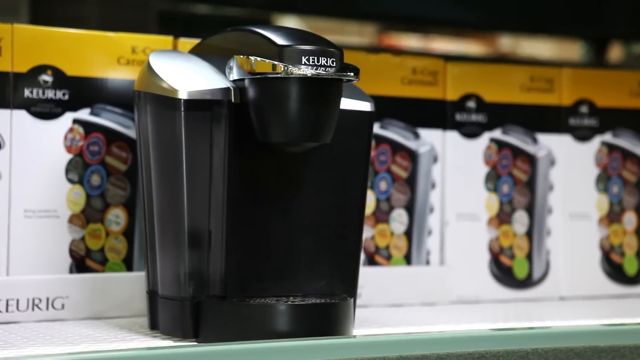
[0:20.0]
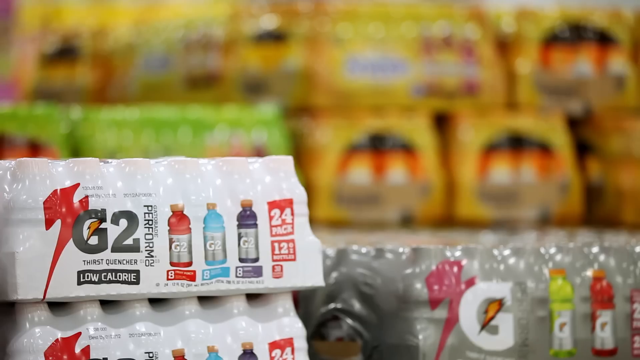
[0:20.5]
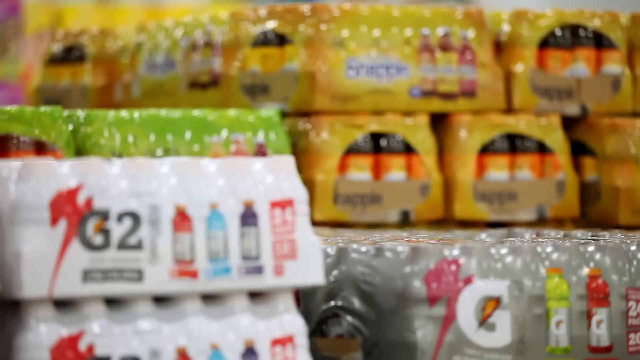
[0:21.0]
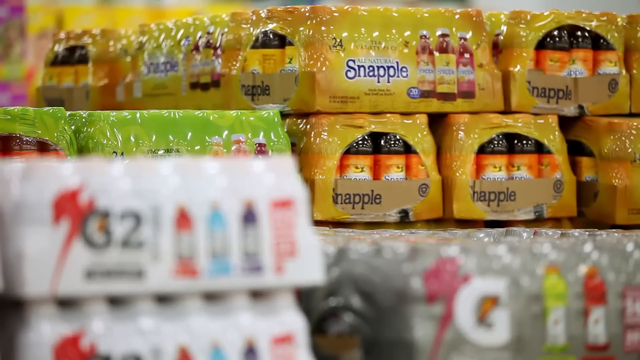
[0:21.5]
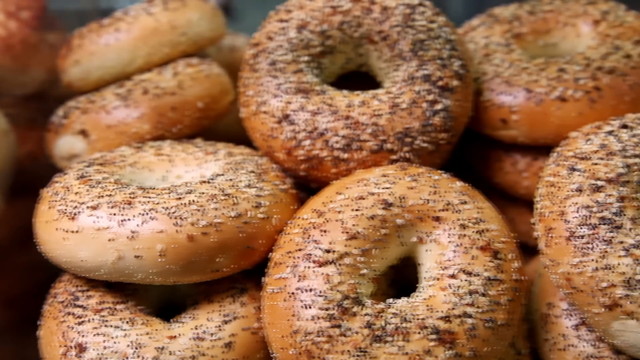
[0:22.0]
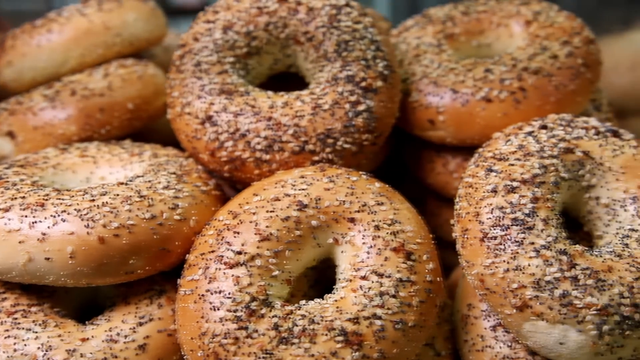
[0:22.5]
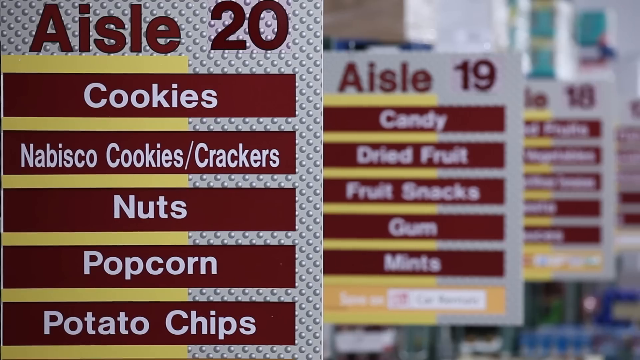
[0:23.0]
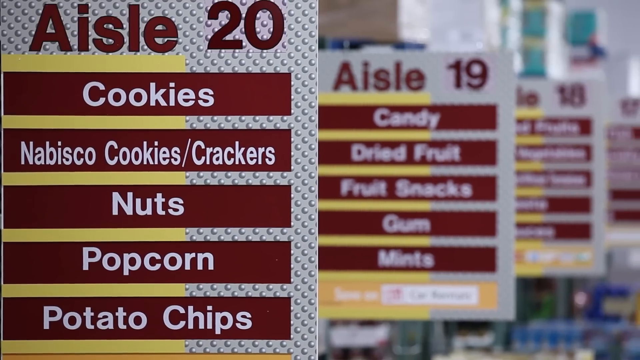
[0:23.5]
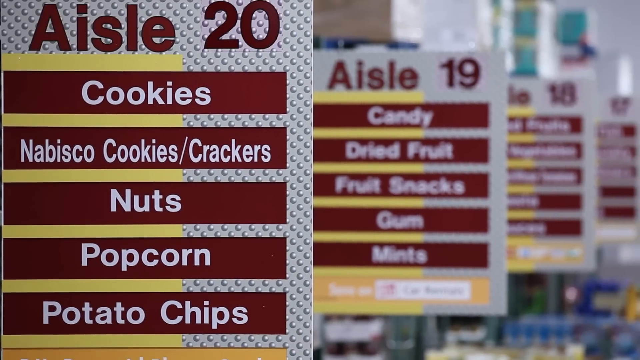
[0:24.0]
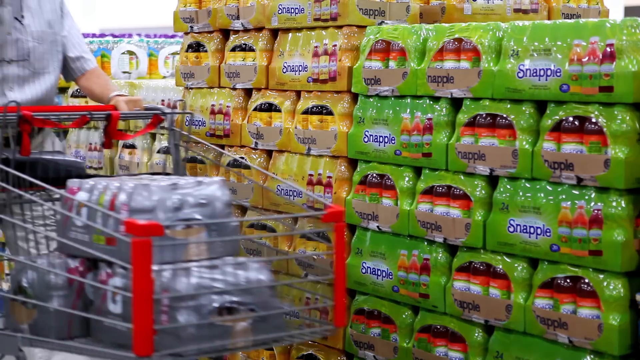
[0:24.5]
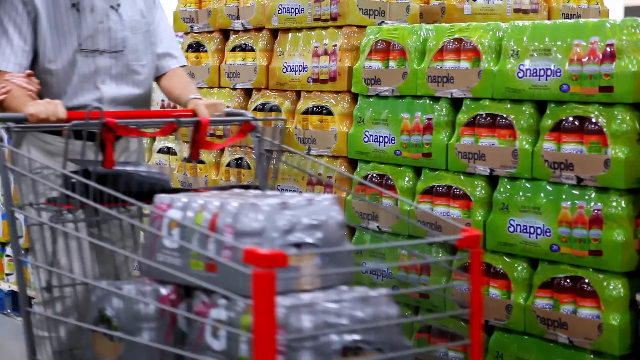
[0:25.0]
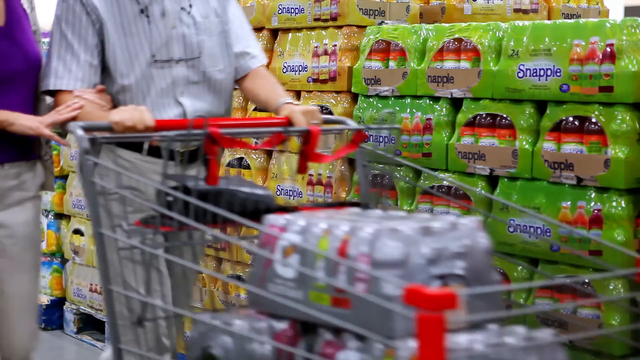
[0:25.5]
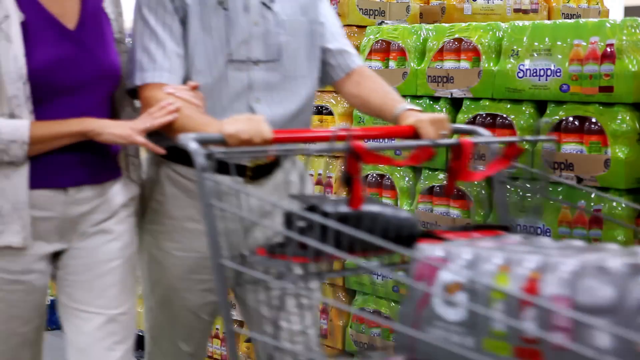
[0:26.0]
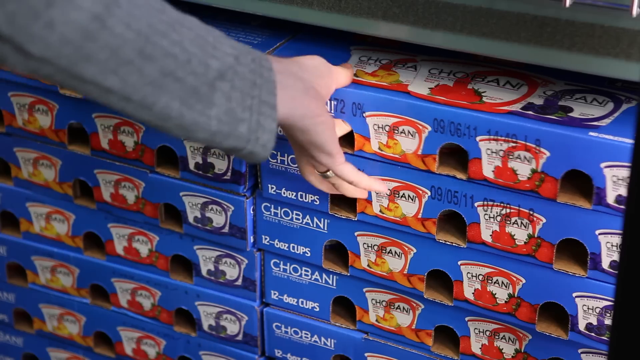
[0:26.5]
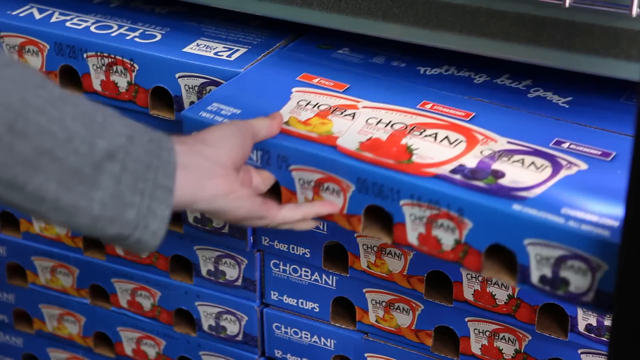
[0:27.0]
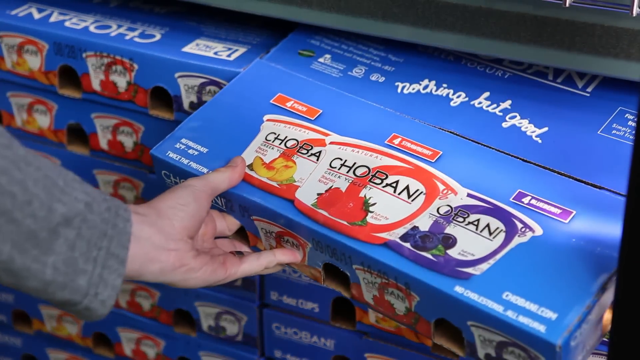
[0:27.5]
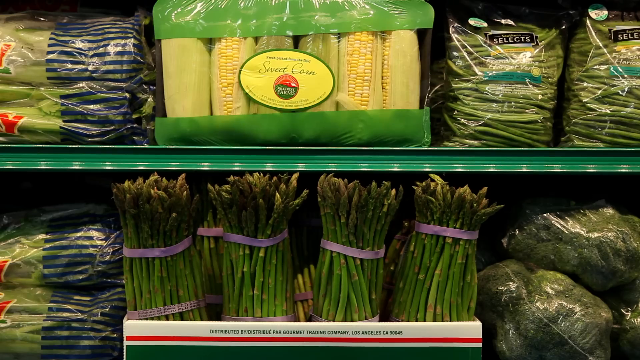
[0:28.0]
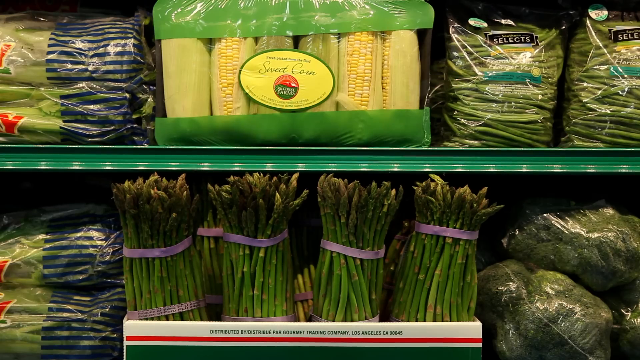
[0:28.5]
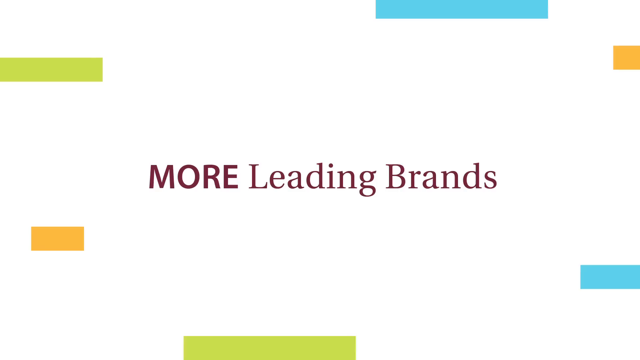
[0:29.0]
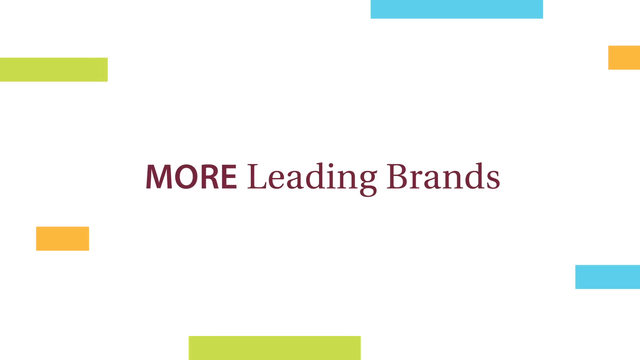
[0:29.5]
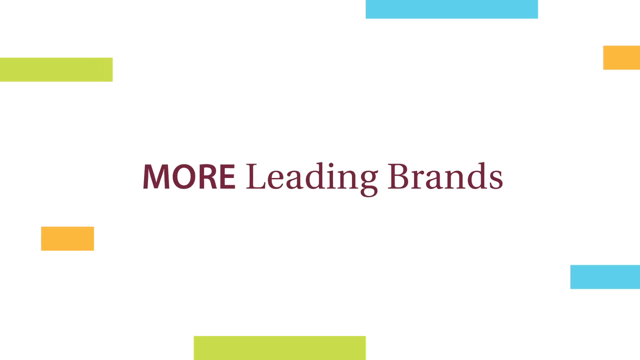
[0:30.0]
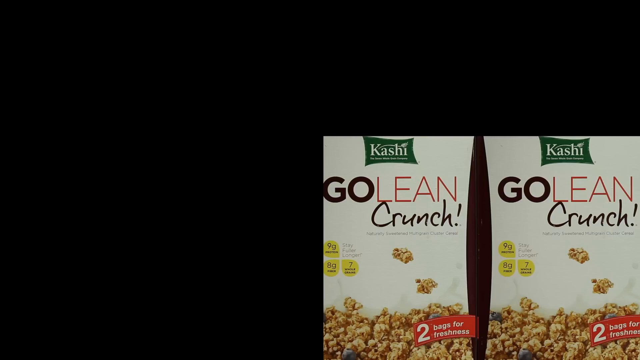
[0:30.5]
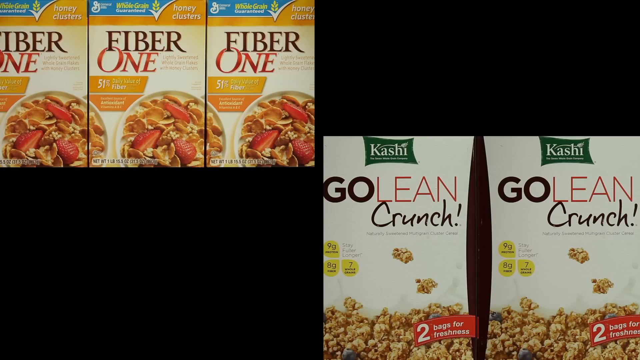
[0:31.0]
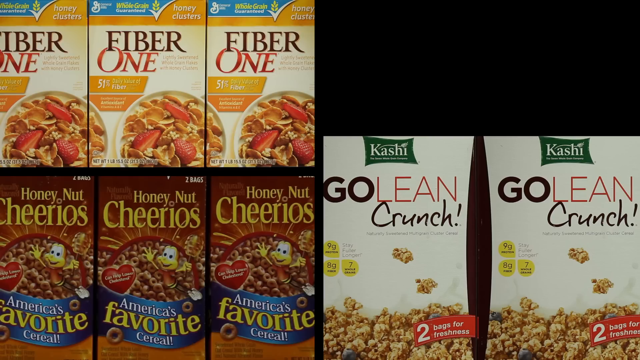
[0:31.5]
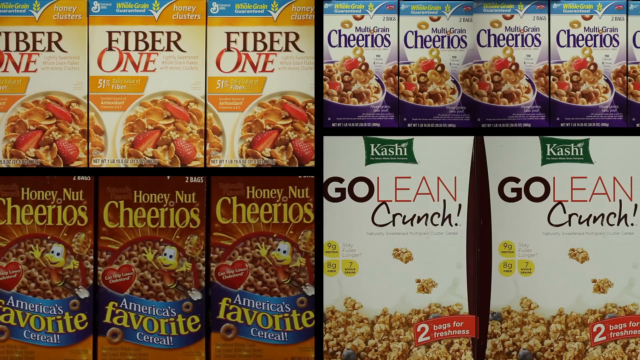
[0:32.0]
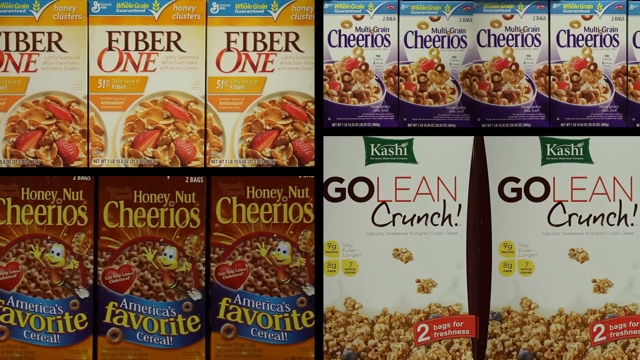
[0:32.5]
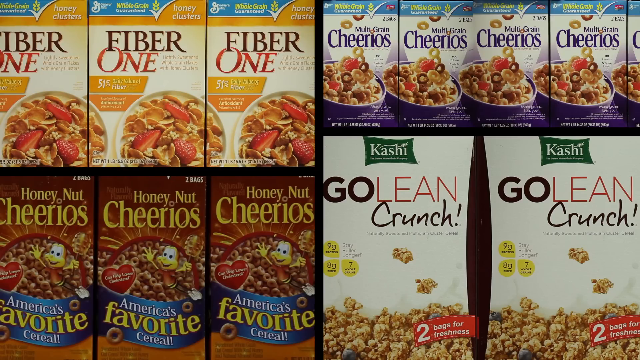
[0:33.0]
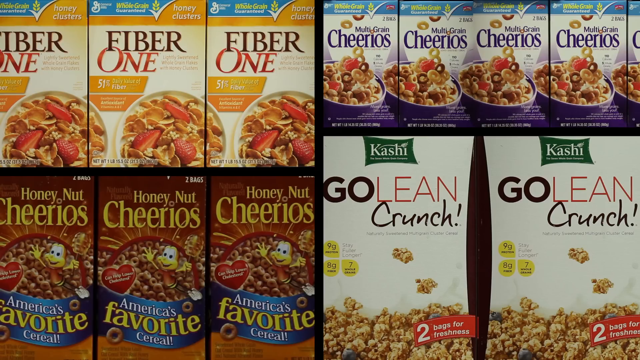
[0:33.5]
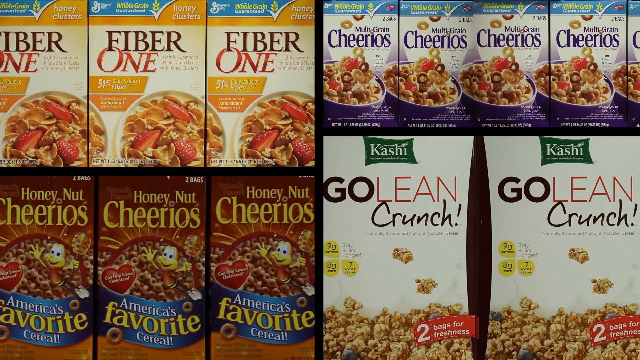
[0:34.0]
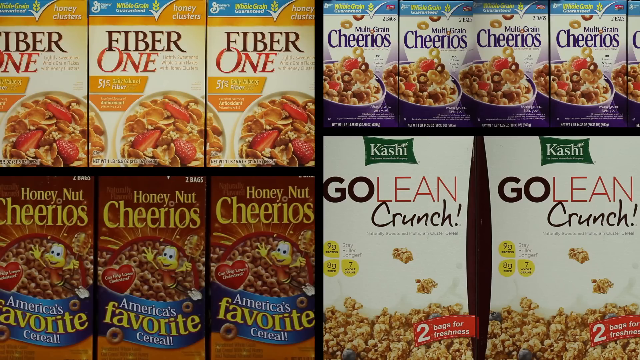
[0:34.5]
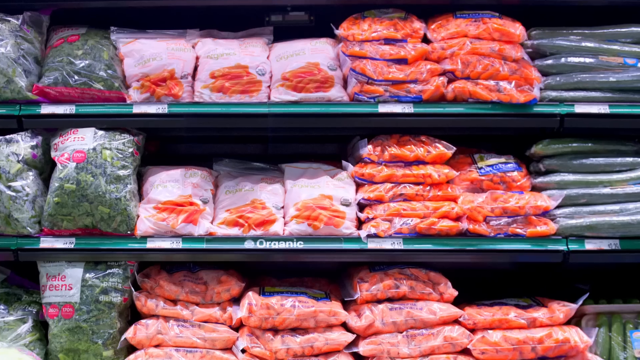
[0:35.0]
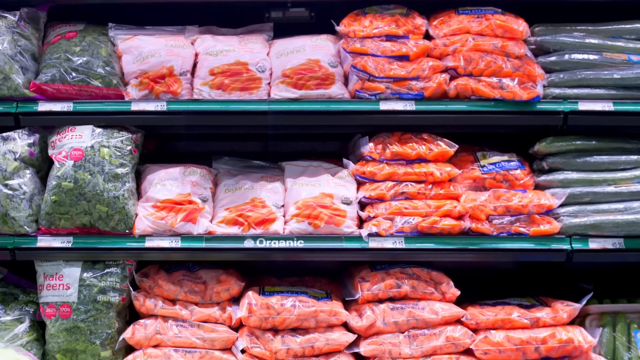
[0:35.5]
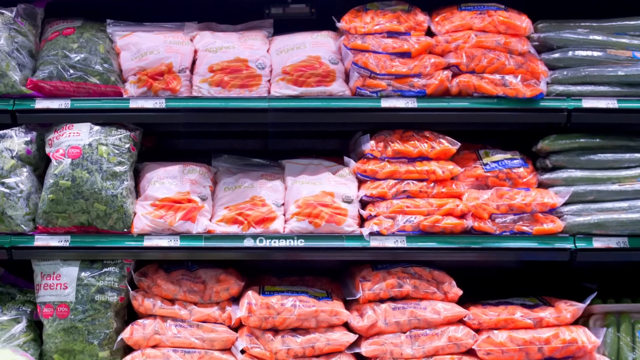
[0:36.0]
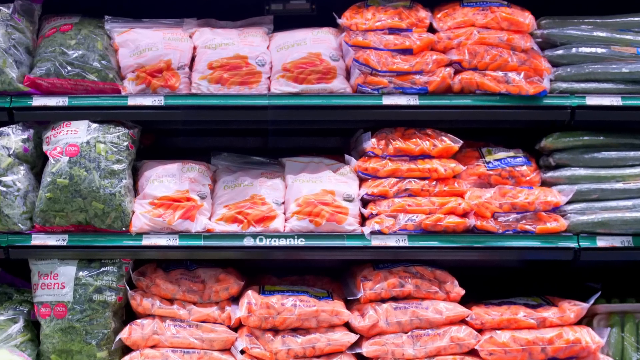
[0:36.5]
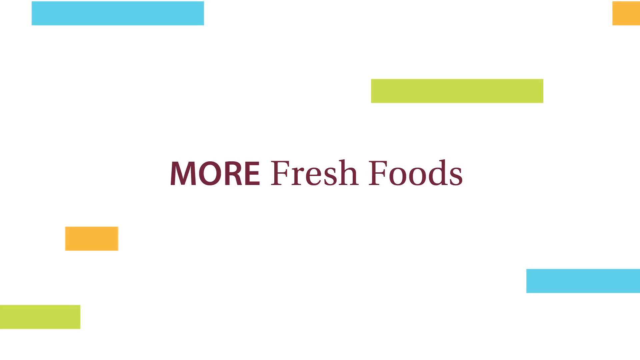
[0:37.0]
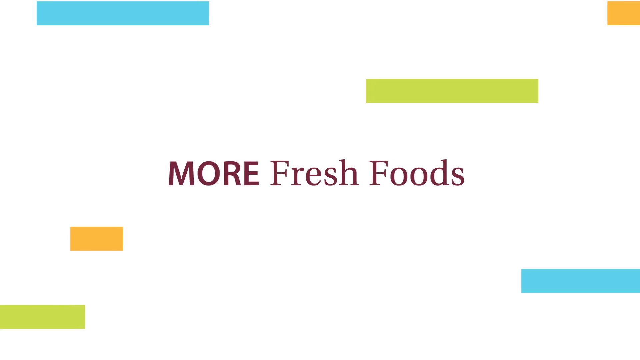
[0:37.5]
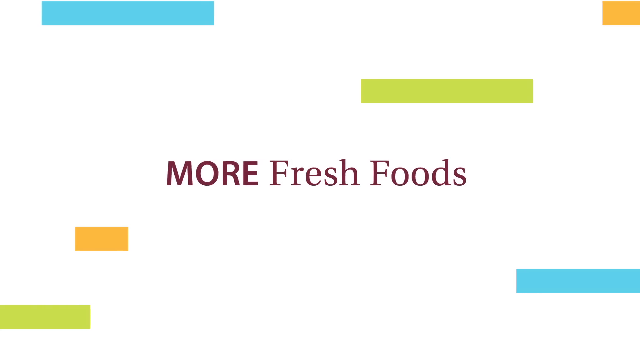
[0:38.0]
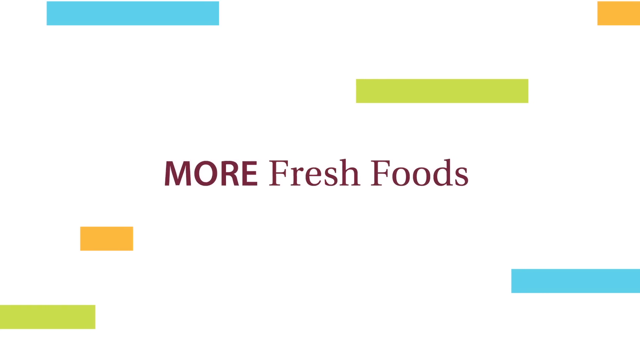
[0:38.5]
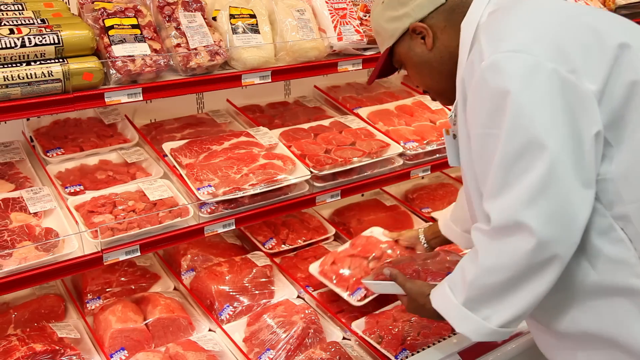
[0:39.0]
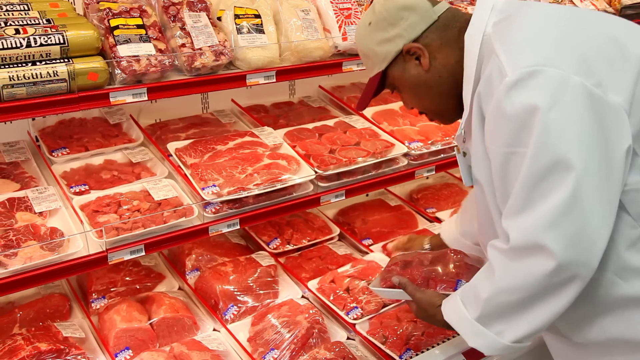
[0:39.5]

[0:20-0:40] More very quick shots follow. First there is a coffee maker, with all the boxes of the item lined up behind it. Next comes the area dedicated to drinks, with all the drinks piled up on top of each other, then a close-up of some fresh bagels, someone pushing a cart through an aisle, and a person picking up a box of yoghurt cups from the shelves. A close-up shows some shelves with vegetables and asparagus. A white background appears with some coloured geometric elements moving and the words "more leading brands" in the middle of the screen. Some cereal boxes then appear on screen on a black background. Another shot shows shelves with packed vegetables. The white background with the colourful geometric shapes returns, with the text "More Fresh Foods" in the middle. Finally, someone wearing a white vest puts some packed meat in the dedicated space.